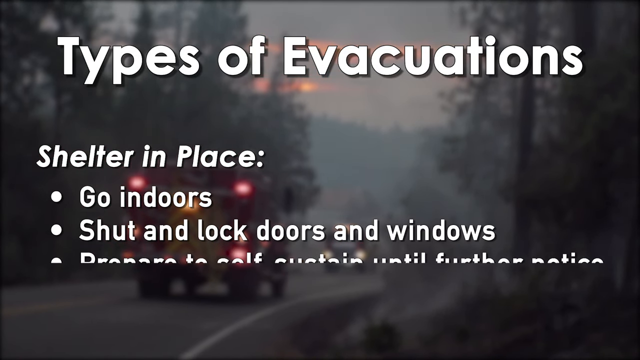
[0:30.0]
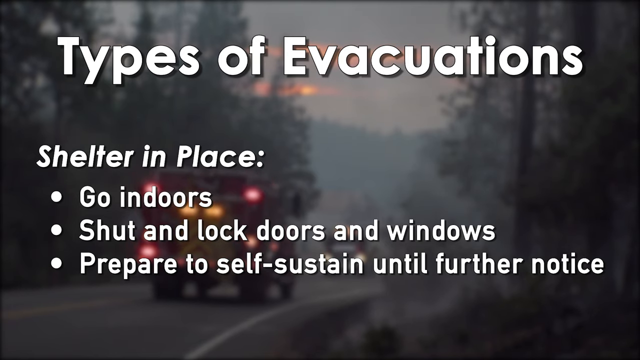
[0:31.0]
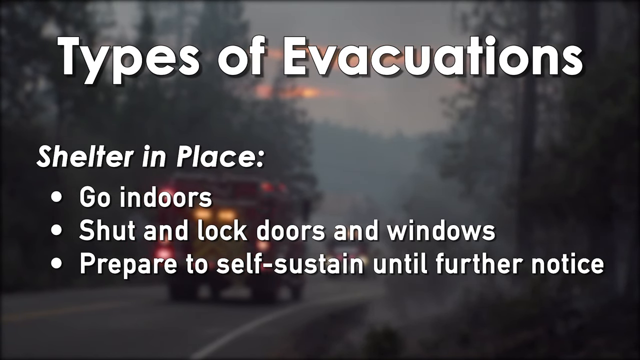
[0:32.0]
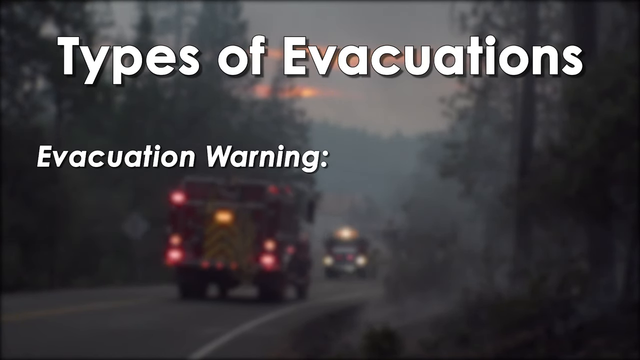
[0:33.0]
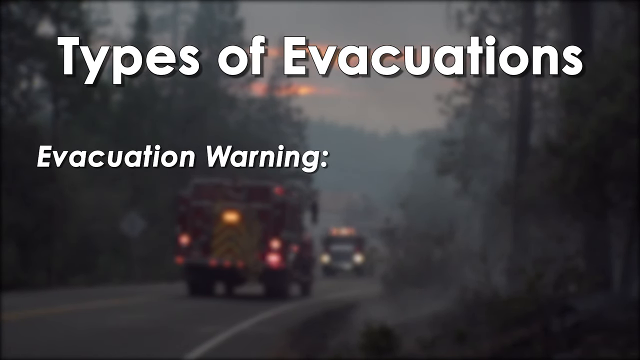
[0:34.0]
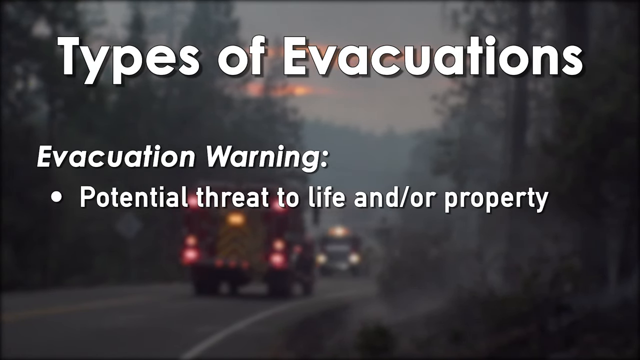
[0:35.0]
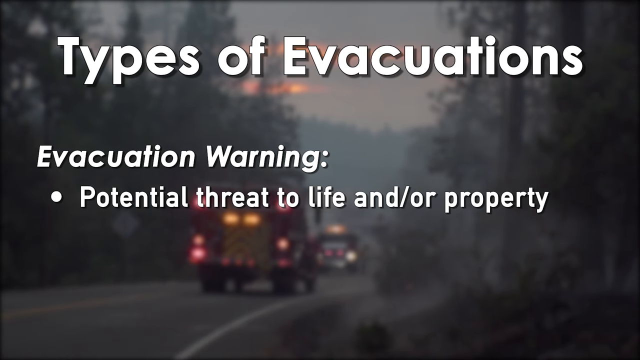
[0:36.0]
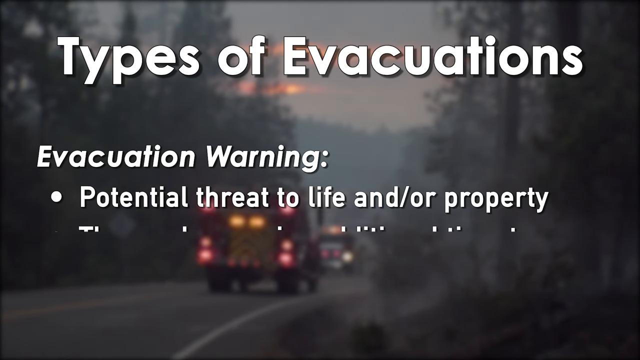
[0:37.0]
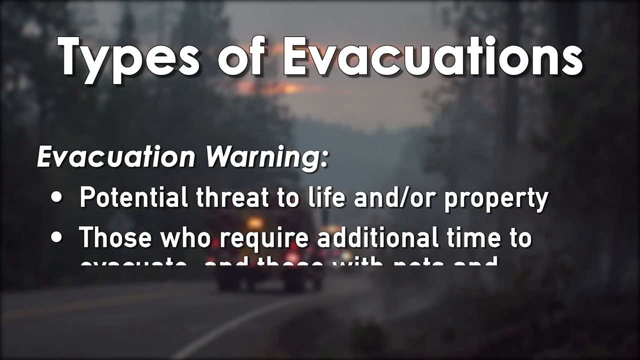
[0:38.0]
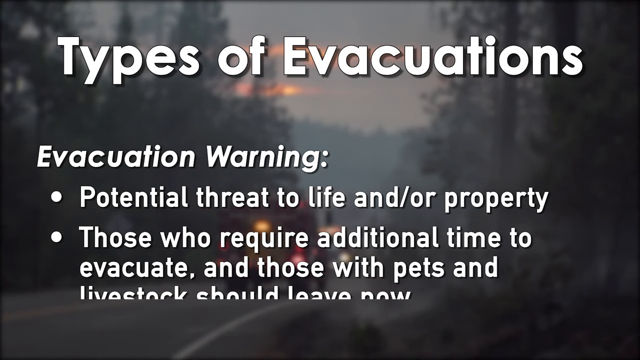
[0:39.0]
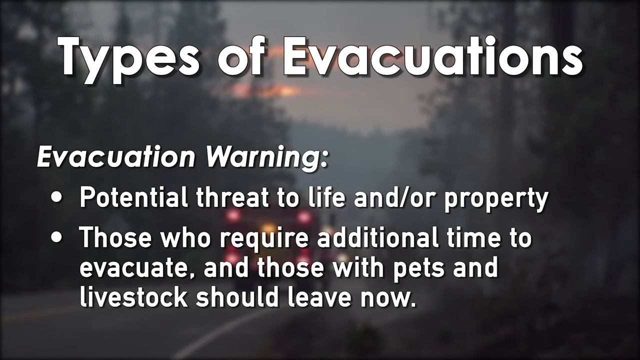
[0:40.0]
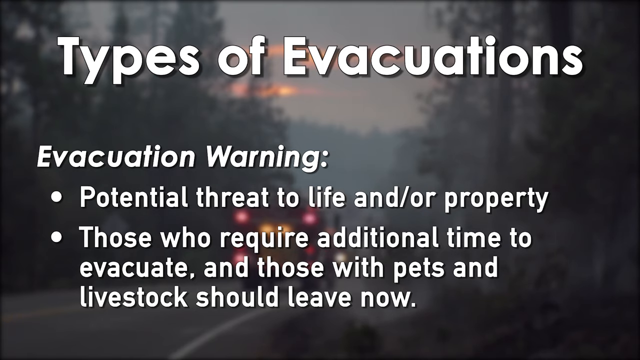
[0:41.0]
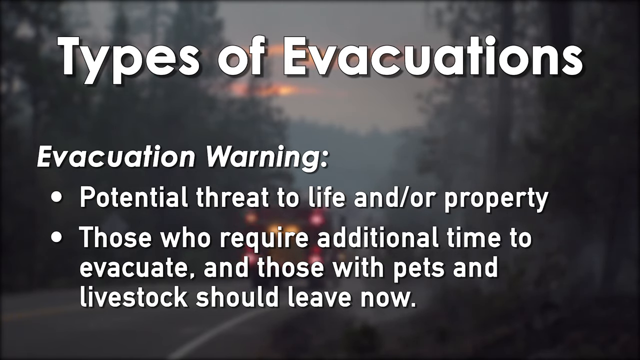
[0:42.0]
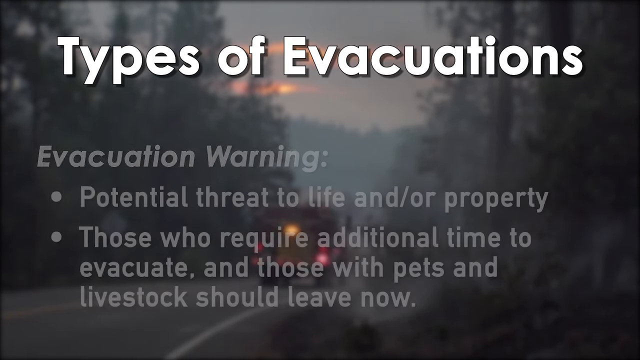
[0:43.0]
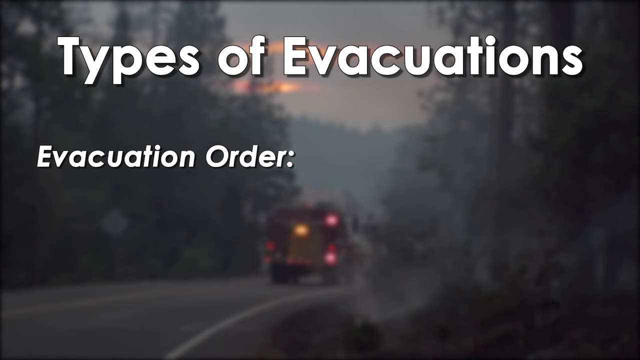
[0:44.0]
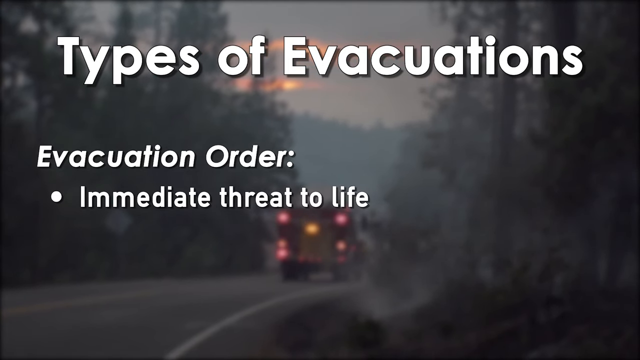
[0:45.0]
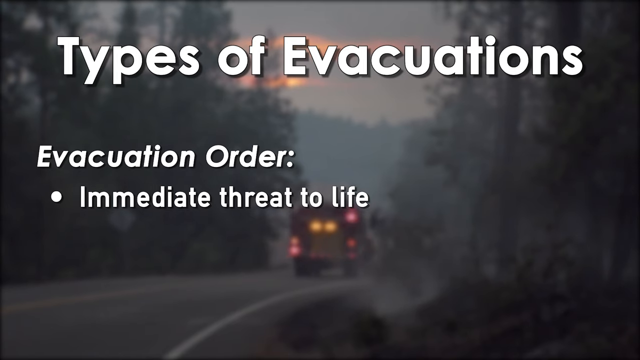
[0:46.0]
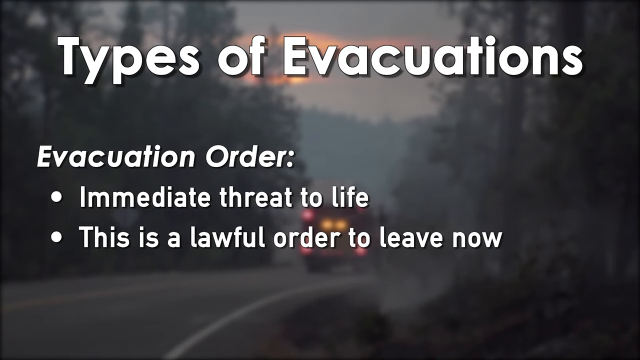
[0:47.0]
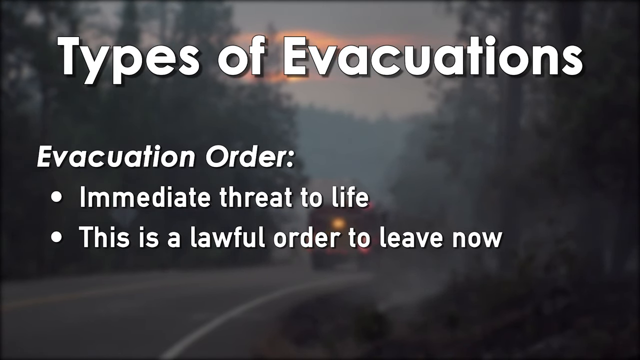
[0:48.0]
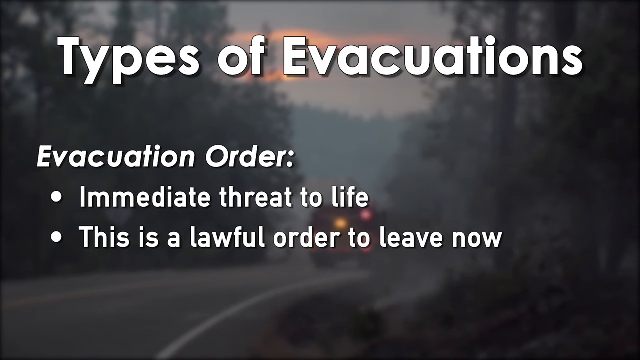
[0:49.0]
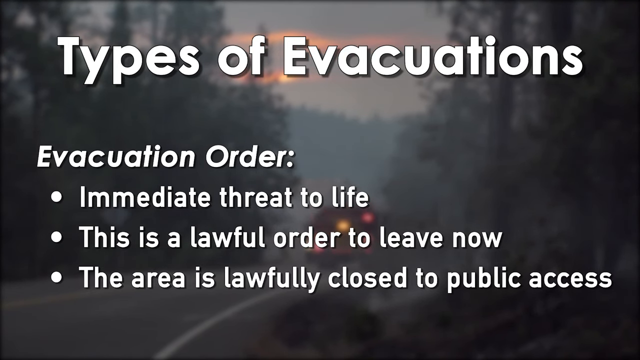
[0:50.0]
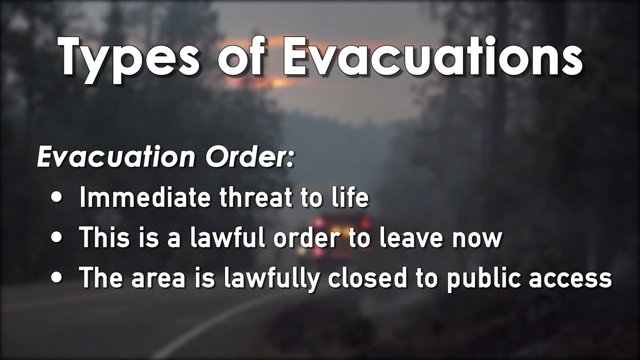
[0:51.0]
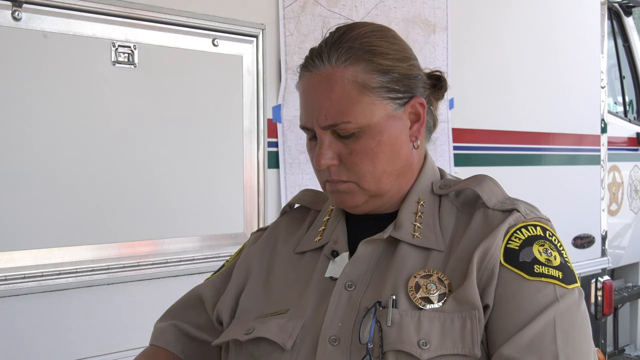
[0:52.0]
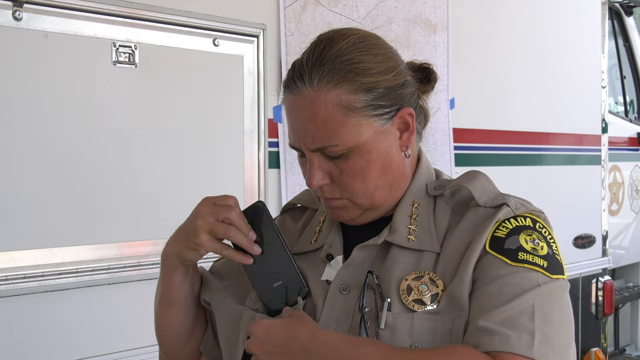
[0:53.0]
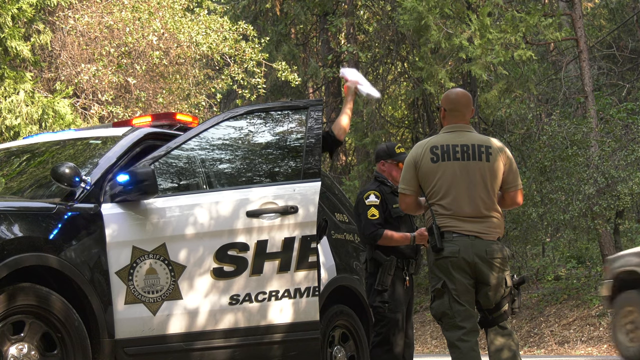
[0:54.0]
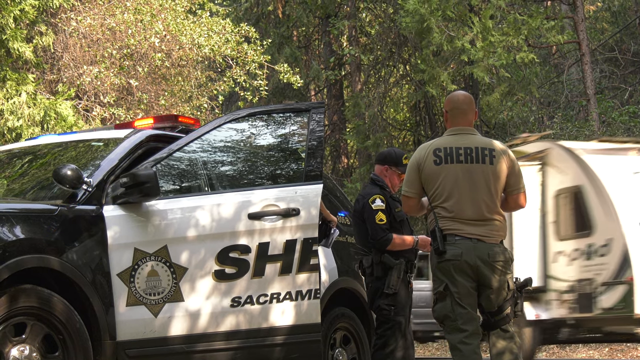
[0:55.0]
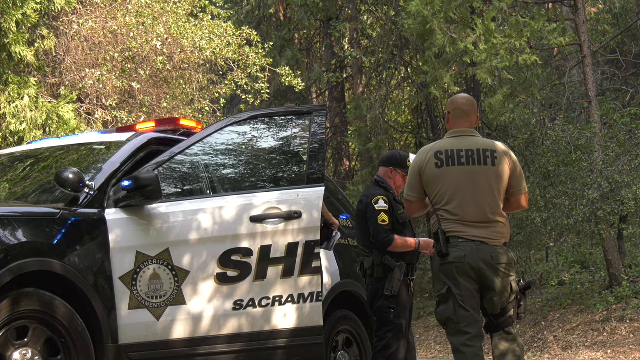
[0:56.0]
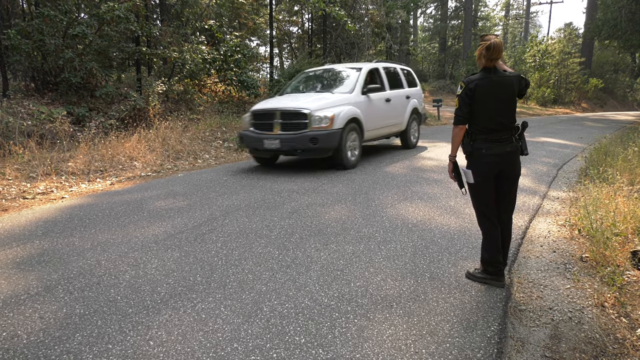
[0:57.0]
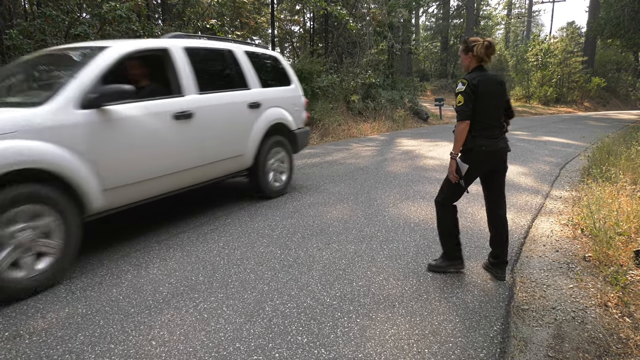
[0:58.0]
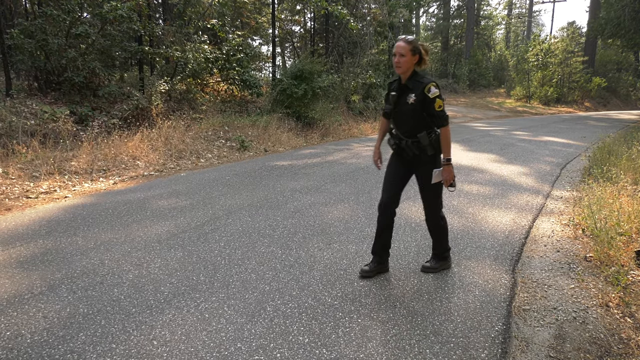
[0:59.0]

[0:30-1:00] The infrastructure in the area has caught fire, possibly from a volcano erupting nearby.